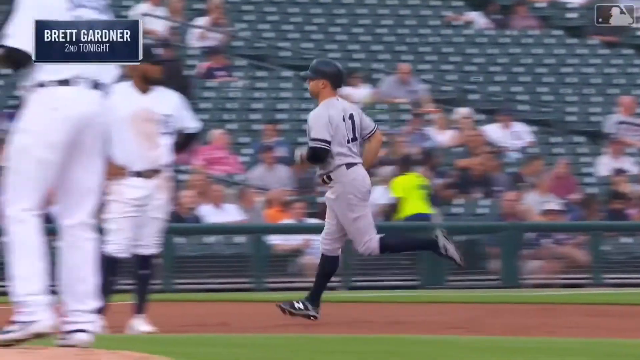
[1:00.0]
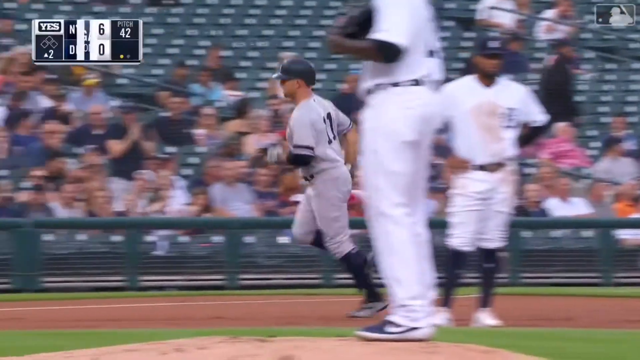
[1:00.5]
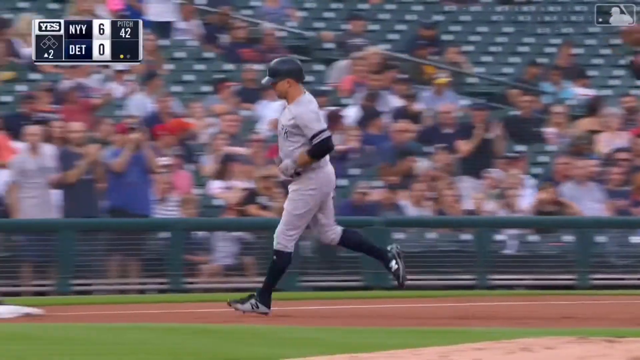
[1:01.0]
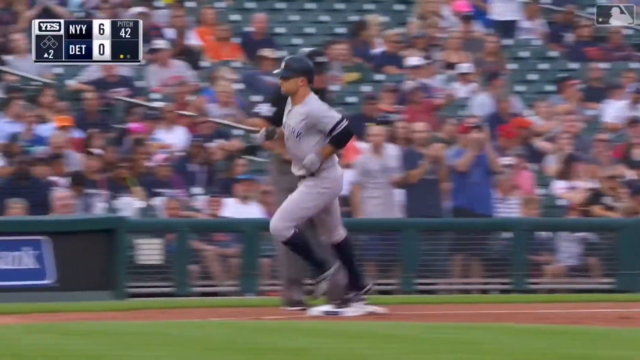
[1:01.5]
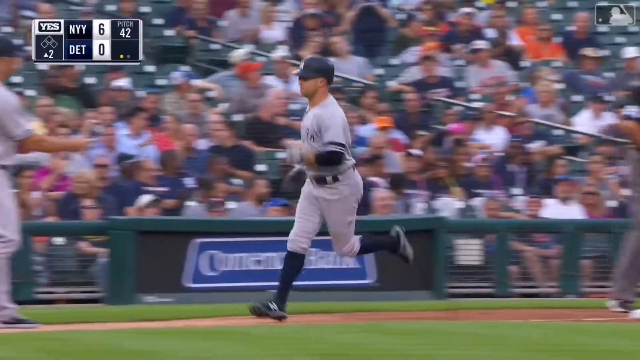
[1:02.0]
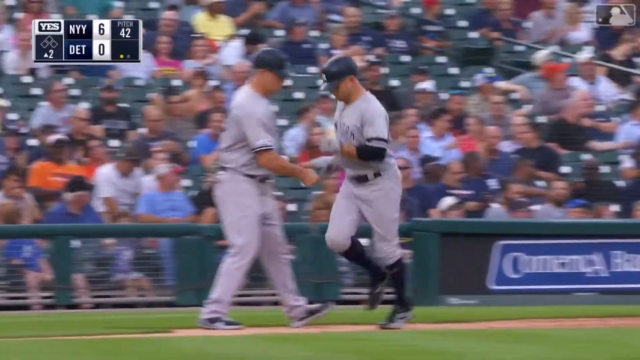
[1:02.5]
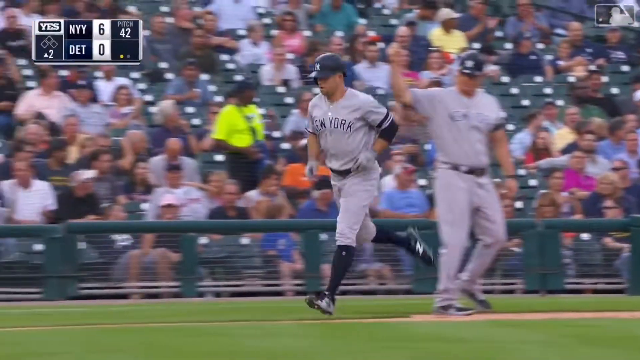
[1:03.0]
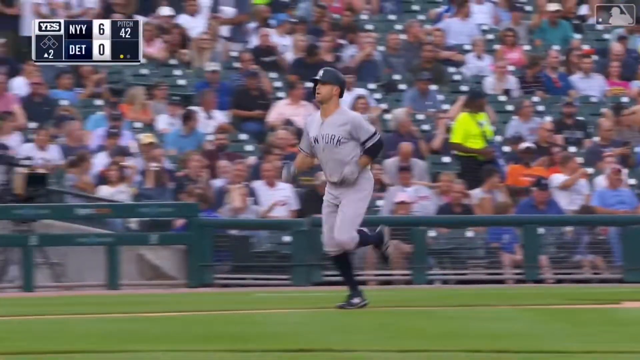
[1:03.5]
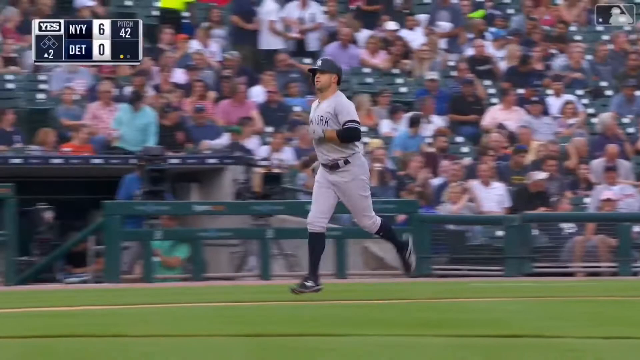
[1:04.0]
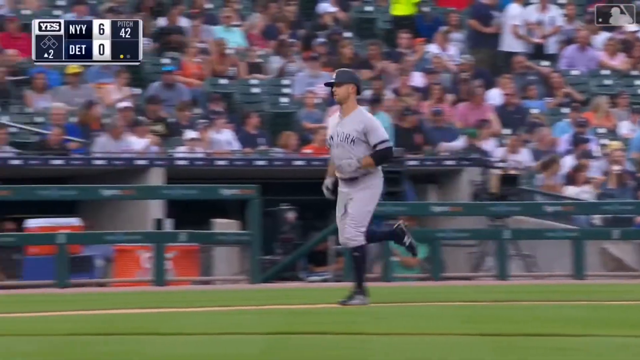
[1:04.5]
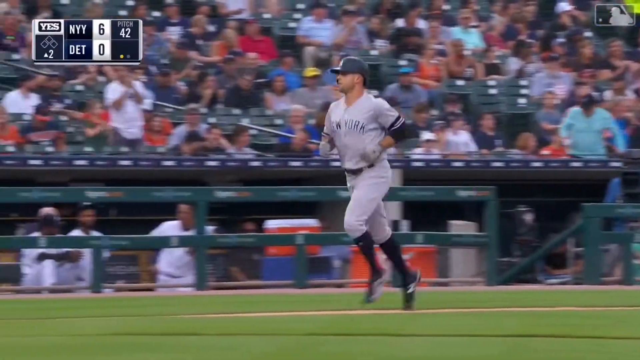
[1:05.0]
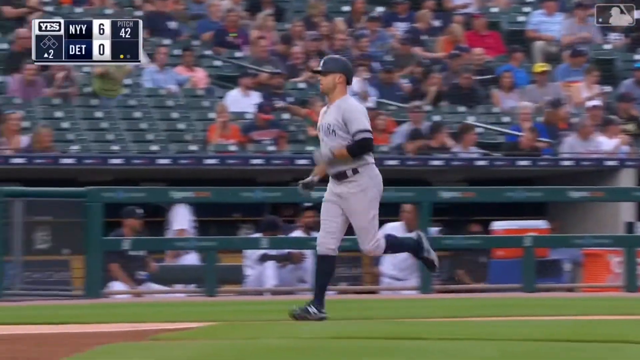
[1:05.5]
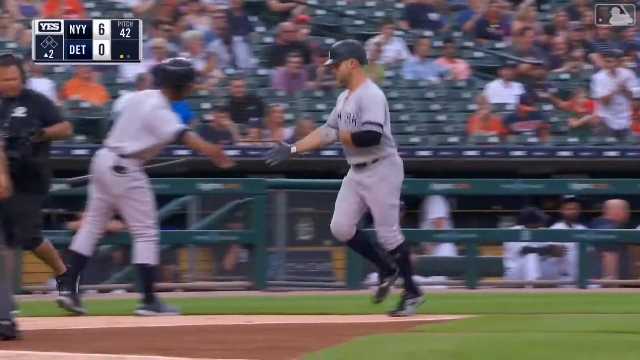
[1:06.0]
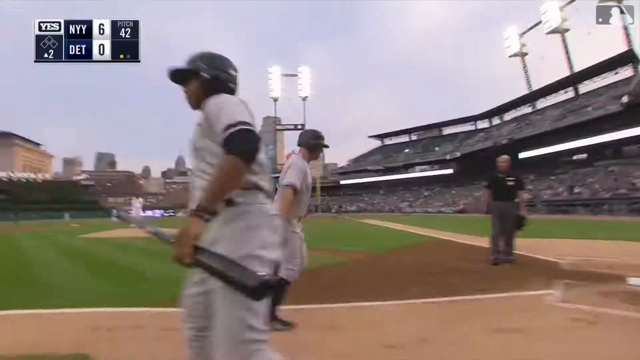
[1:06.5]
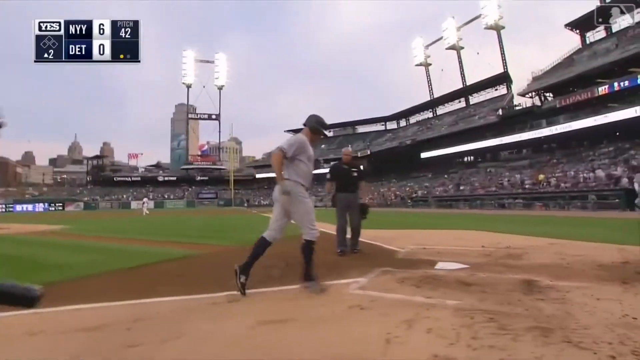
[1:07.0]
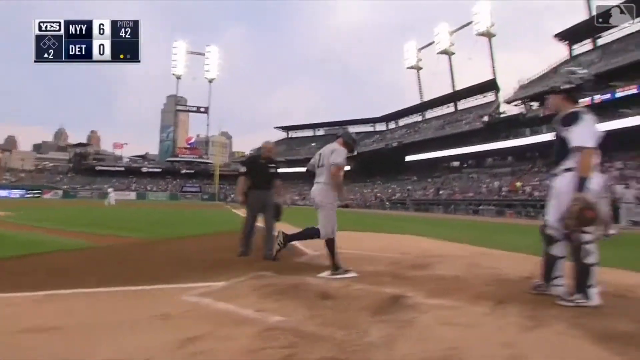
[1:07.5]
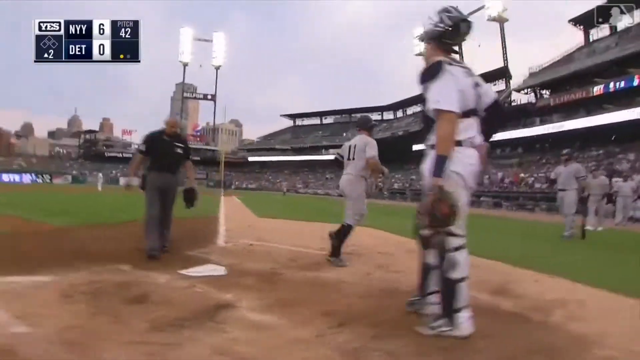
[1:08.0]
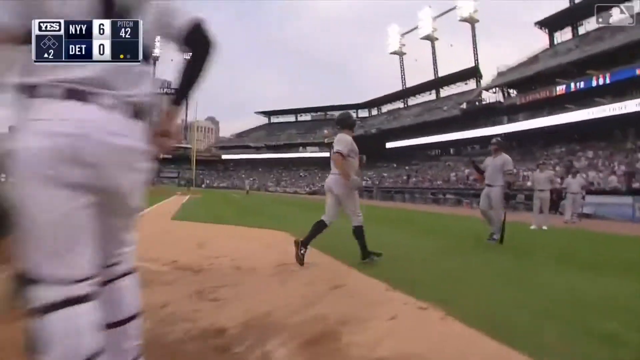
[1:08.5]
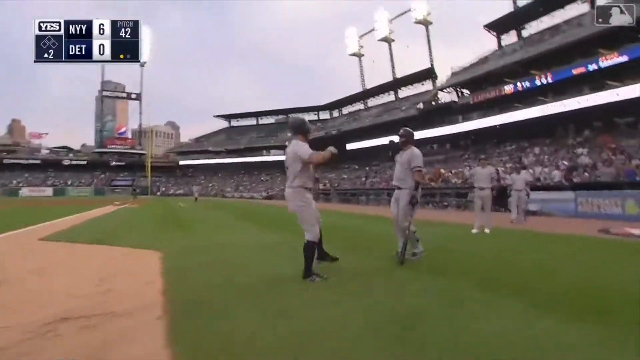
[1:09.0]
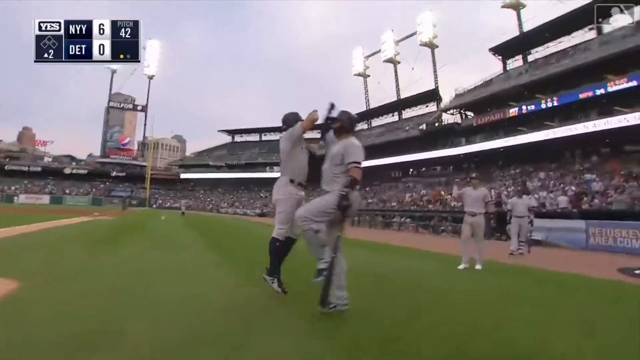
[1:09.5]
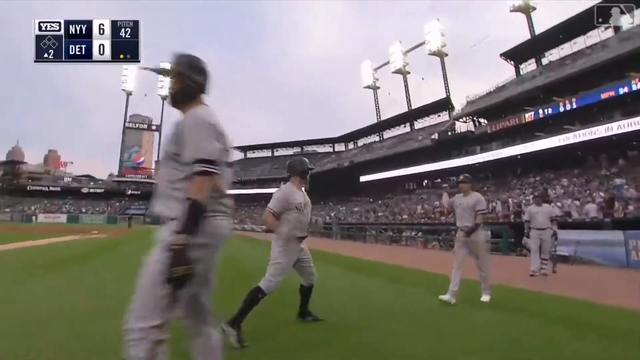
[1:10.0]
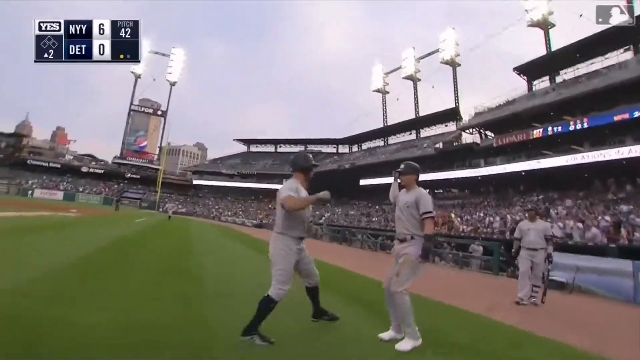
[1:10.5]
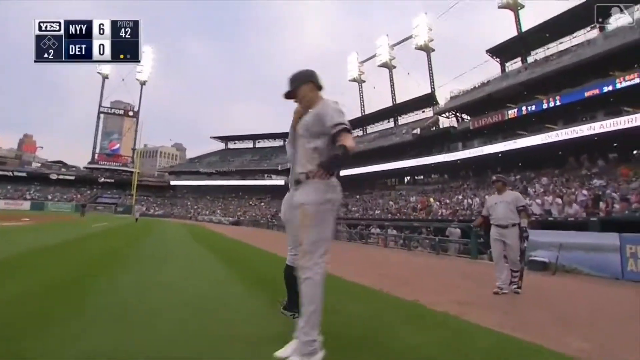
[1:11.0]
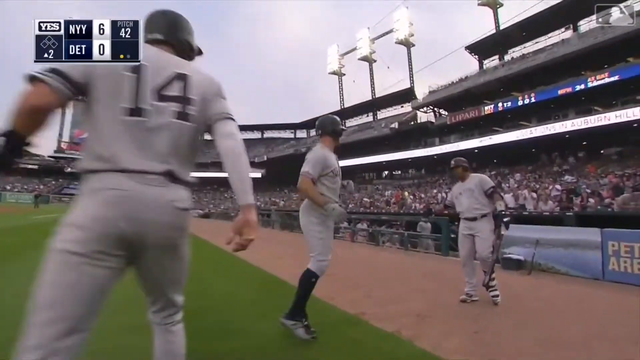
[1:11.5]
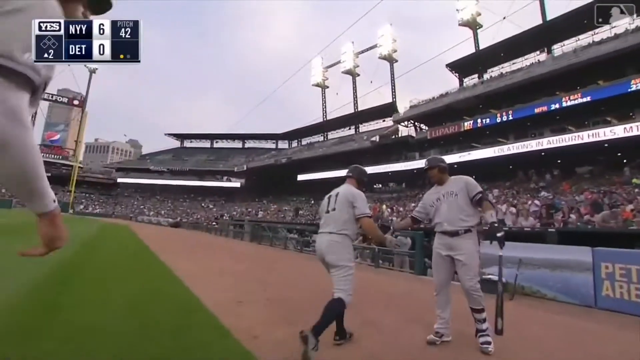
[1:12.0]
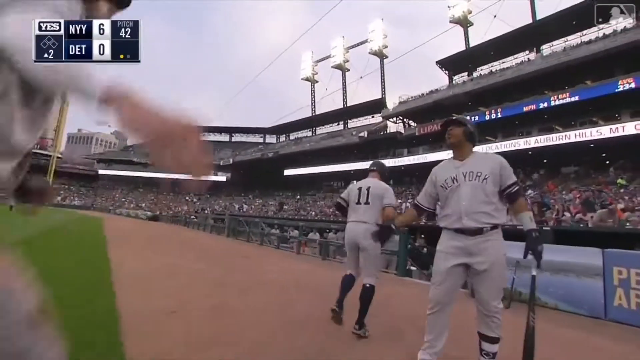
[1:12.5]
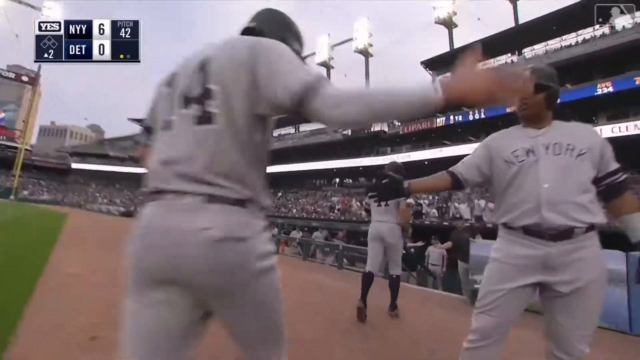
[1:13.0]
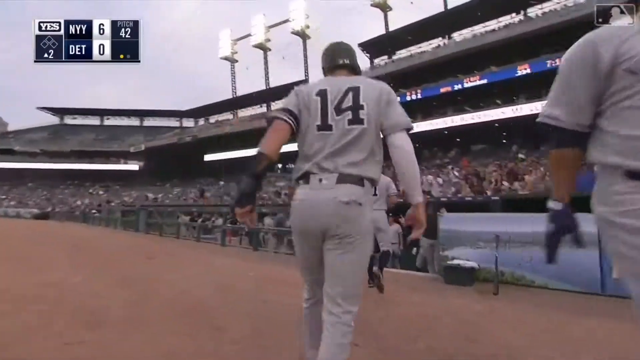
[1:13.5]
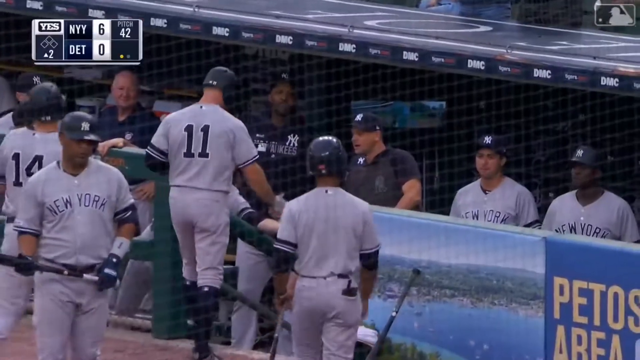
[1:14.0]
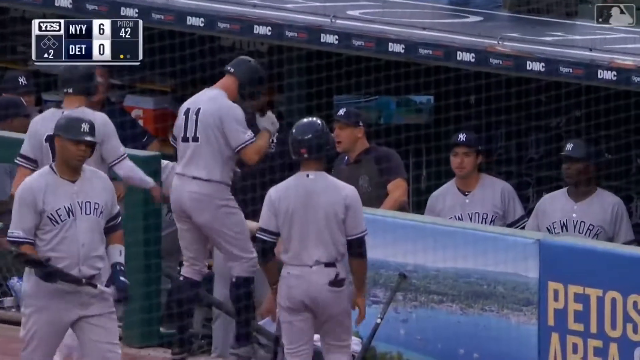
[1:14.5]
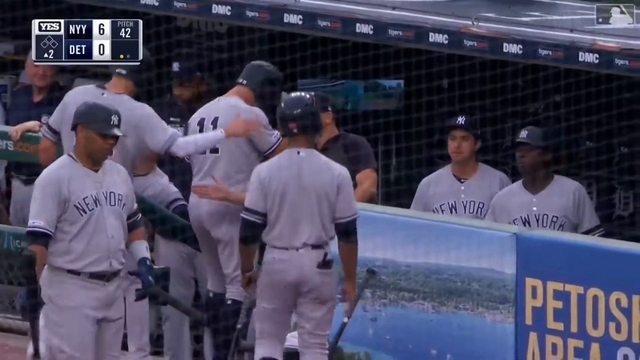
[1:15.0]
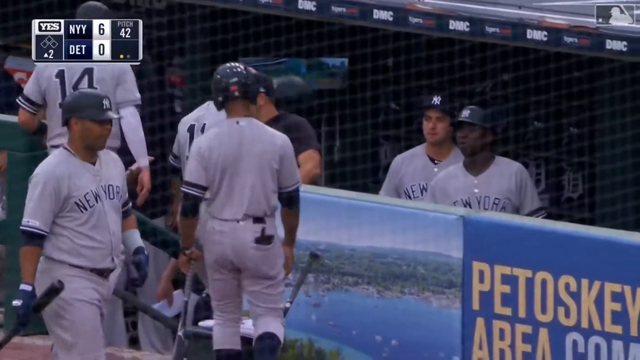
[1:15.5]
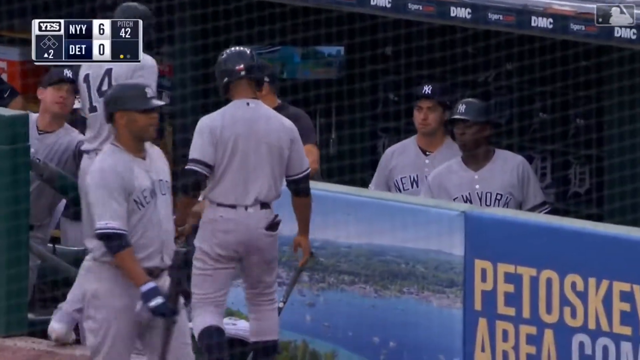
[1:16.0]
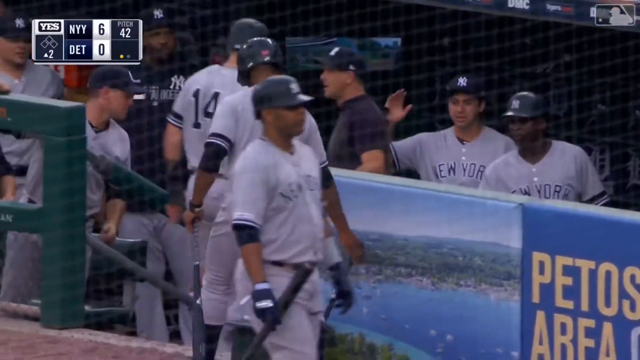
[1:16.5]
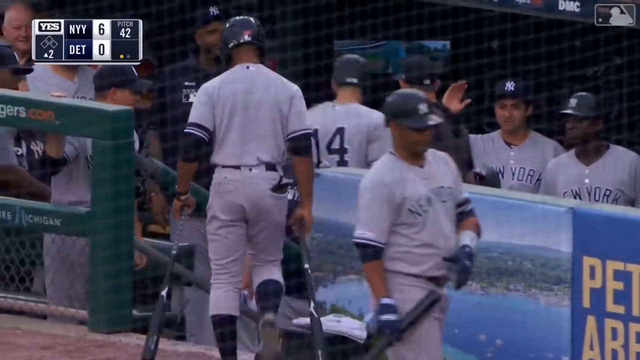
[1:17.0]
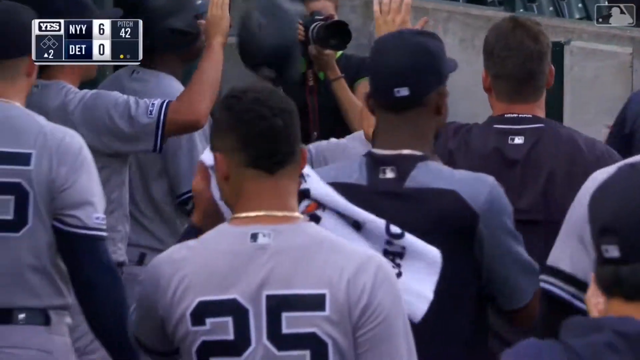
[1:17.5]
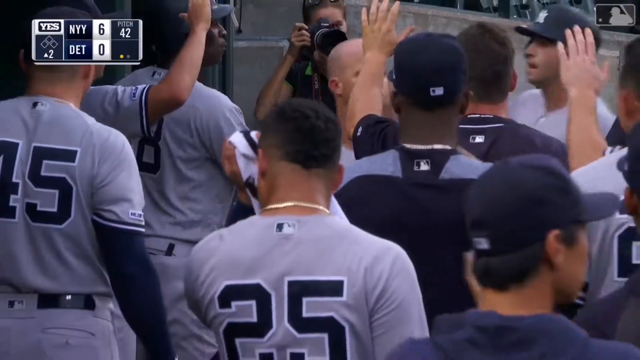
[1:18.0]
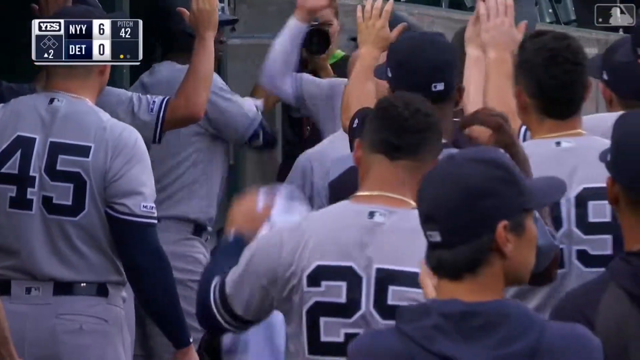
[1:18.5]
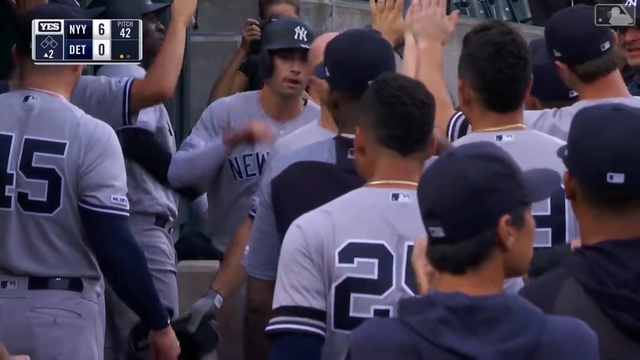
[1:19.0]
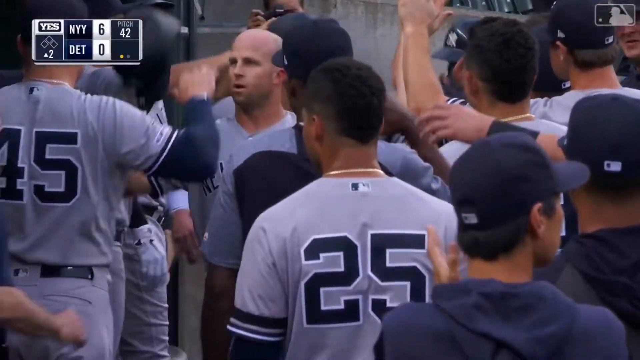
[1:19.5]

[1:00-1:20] A player runs from right to left with a crowd in the background. He seems to be jogging, giving one teammate a high five as he walks through, then a second player, with two jumping high fives. All the players are giving each other high fives; this seems to be a replay of the earlier moment from a different point of view. Every teammate has their hands up for high fives, and they all seem to be cheering one another. There are lights at the very top of the setting, suggesting it may be late afternoon or early evening. Most players have their helmets and hats on, and they seem to be playing for New York. Numbers such as 25 and 45 are visible, and two bald men are at the batting cage. The crowd seems ecstatic as he crosses home.